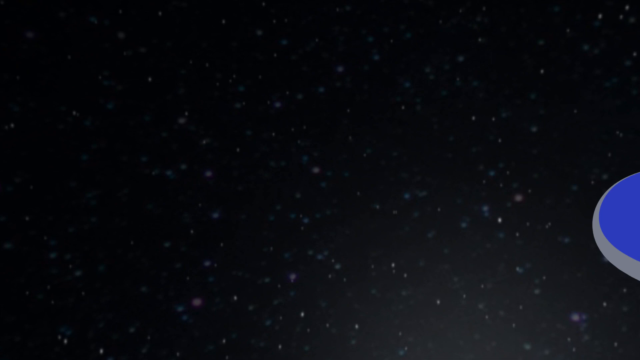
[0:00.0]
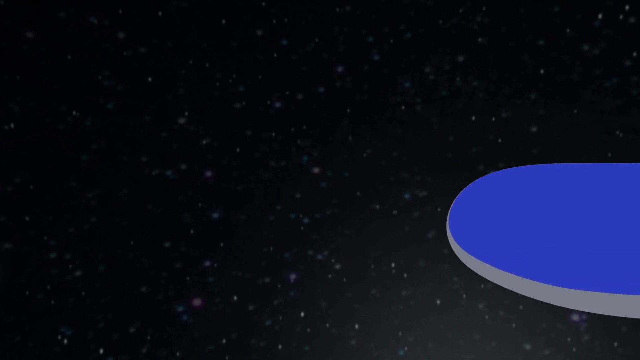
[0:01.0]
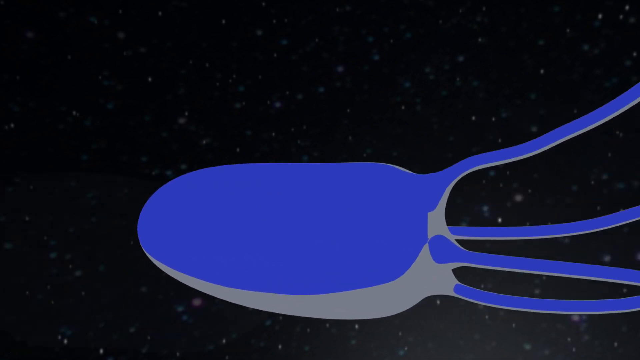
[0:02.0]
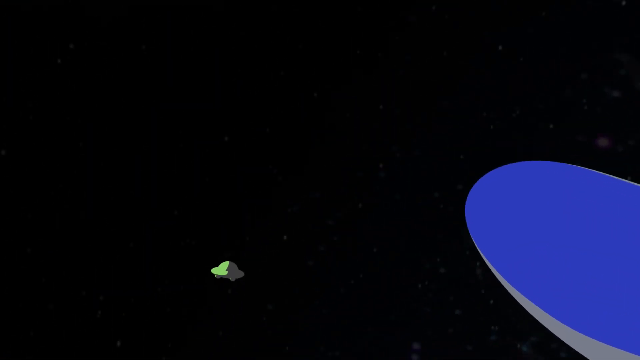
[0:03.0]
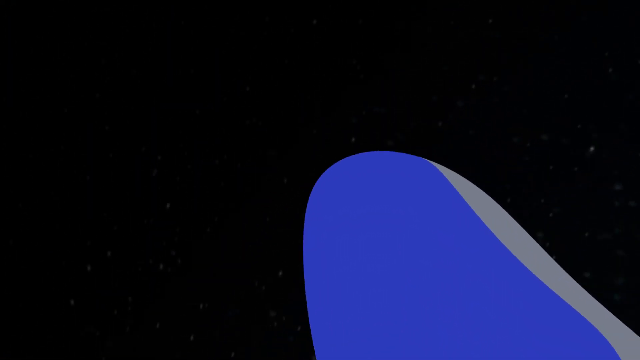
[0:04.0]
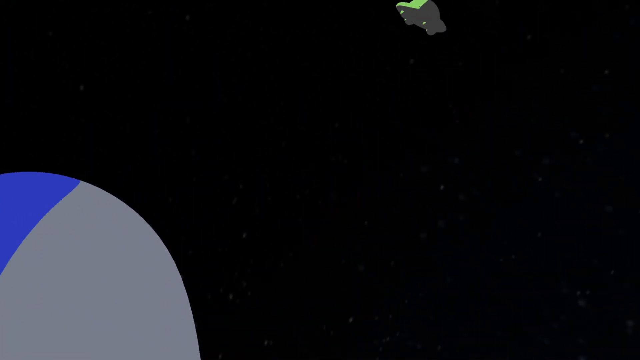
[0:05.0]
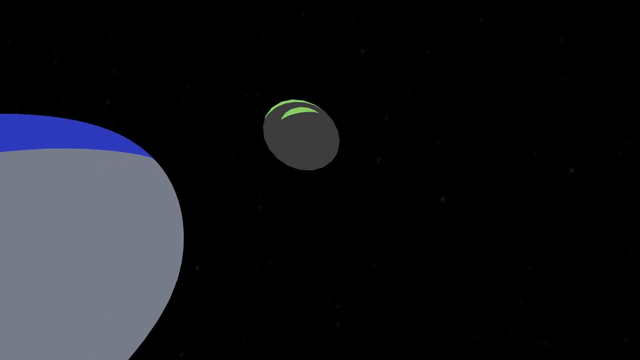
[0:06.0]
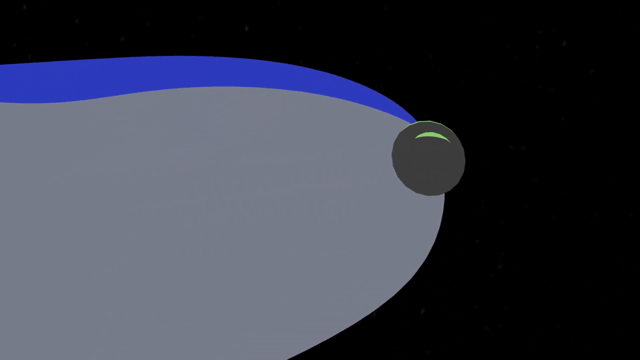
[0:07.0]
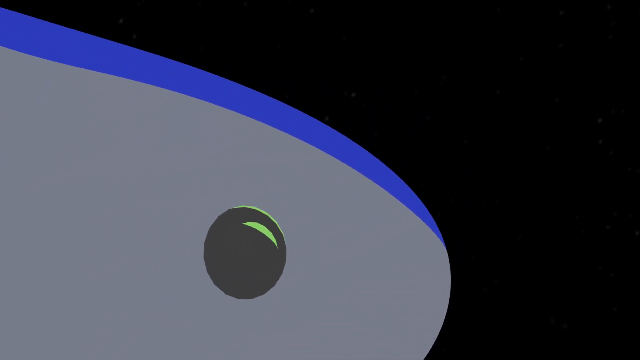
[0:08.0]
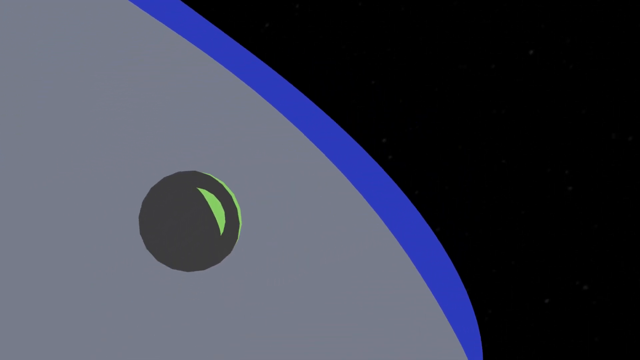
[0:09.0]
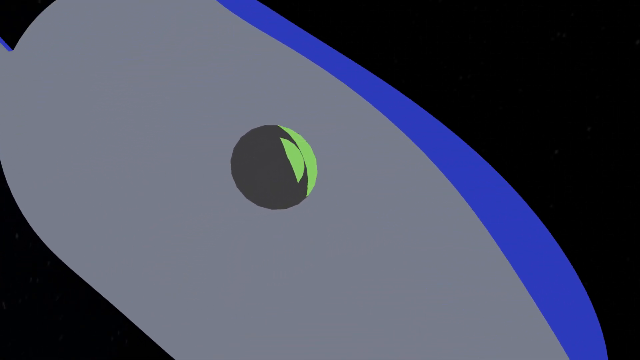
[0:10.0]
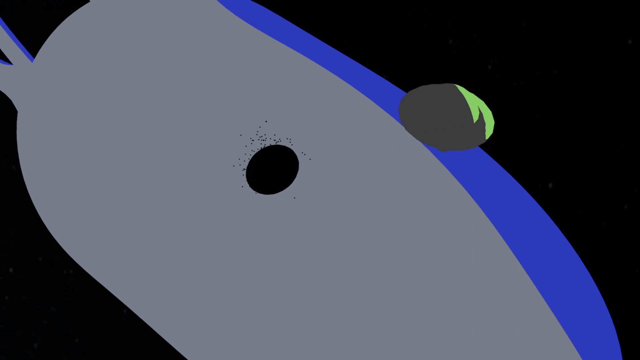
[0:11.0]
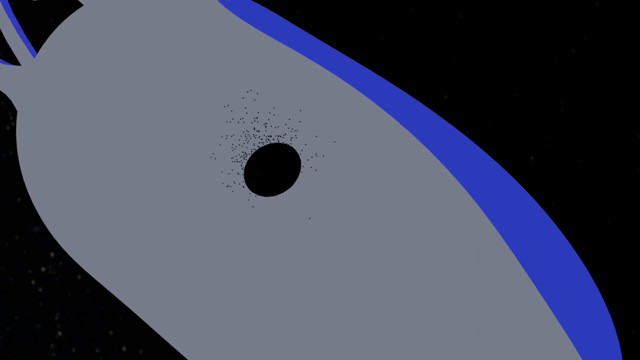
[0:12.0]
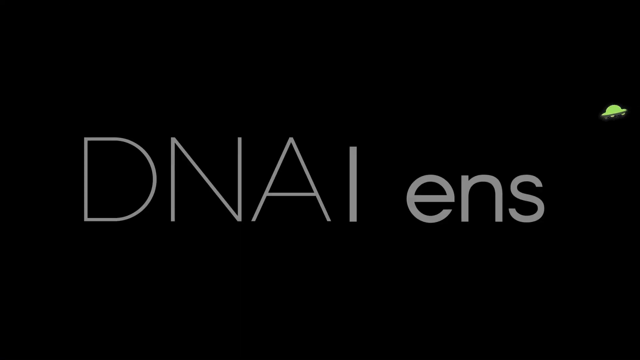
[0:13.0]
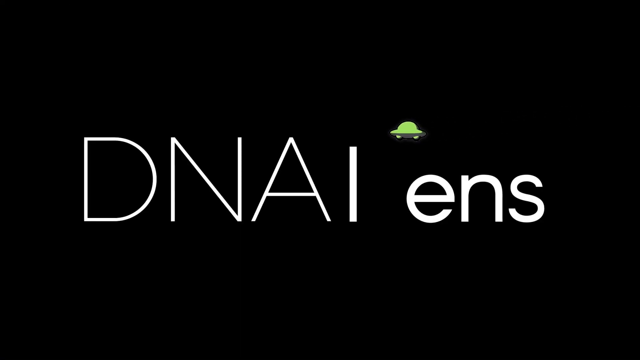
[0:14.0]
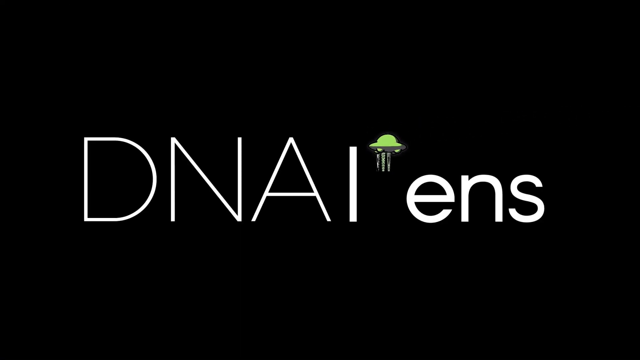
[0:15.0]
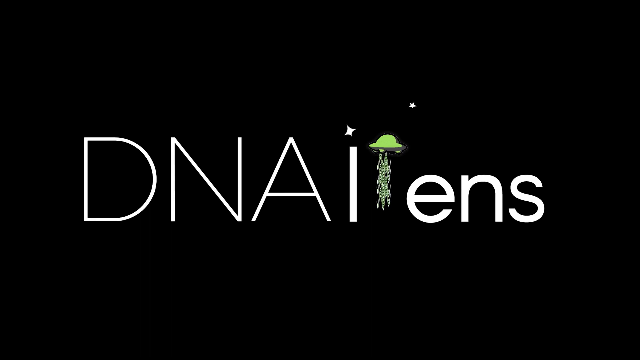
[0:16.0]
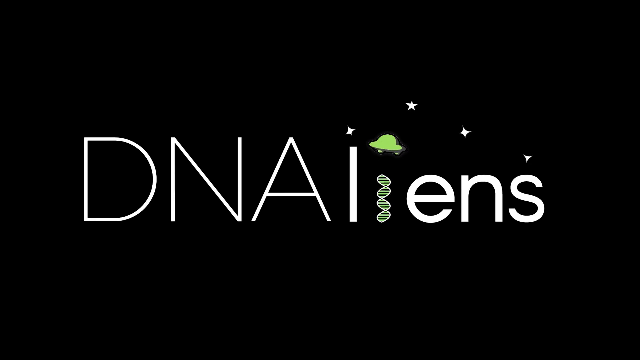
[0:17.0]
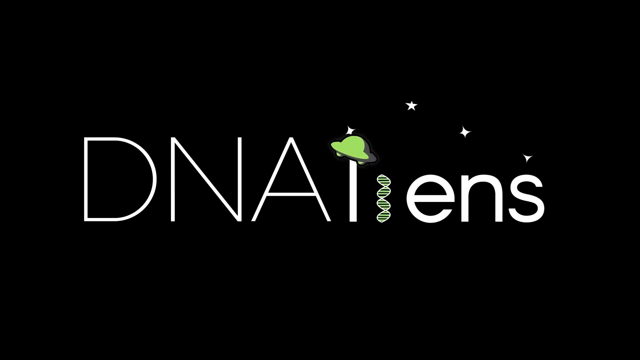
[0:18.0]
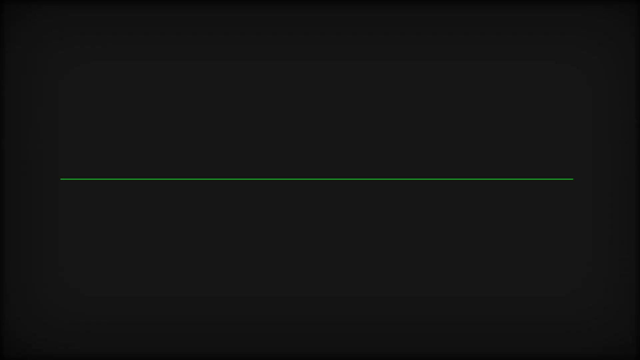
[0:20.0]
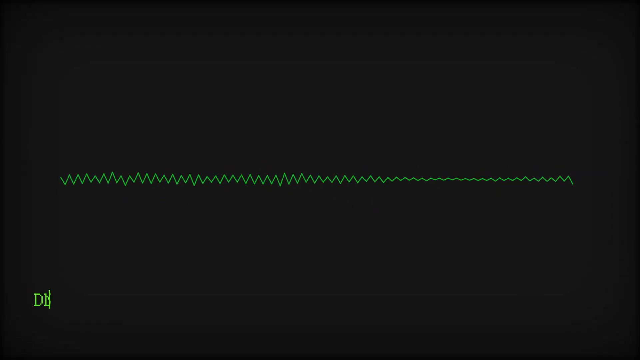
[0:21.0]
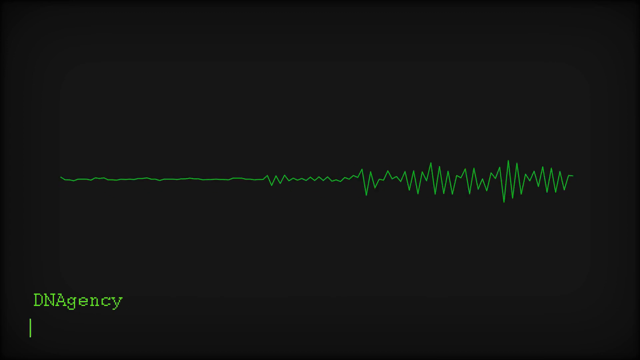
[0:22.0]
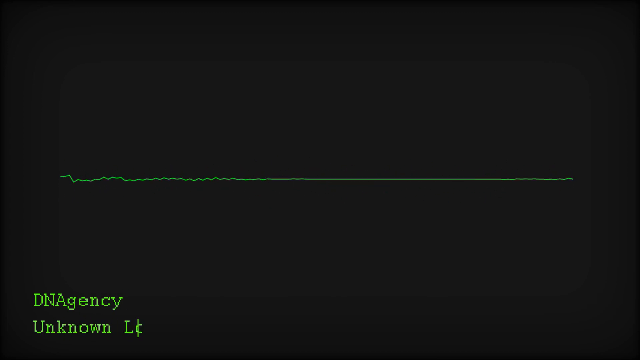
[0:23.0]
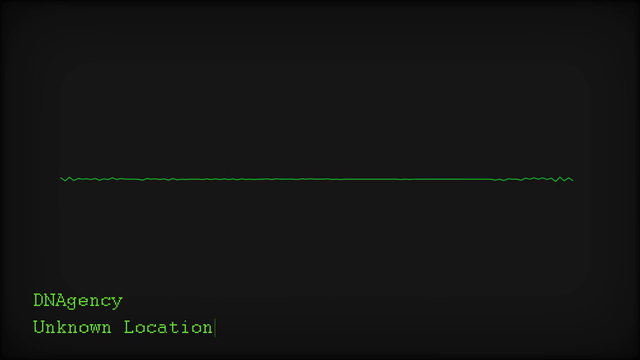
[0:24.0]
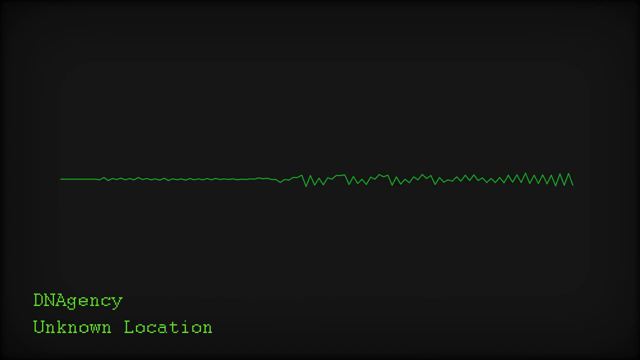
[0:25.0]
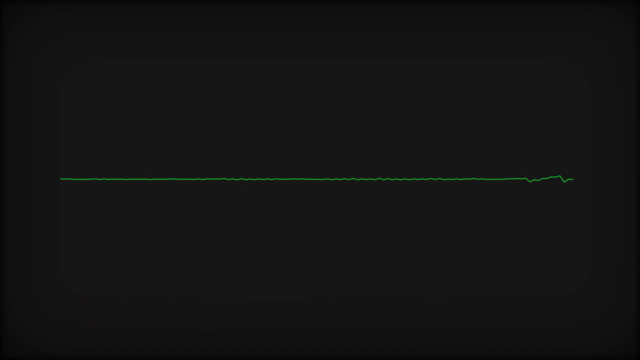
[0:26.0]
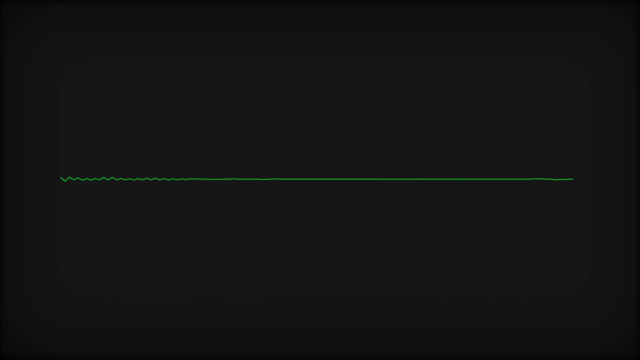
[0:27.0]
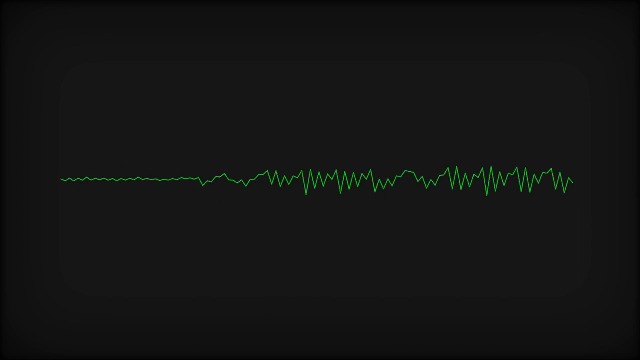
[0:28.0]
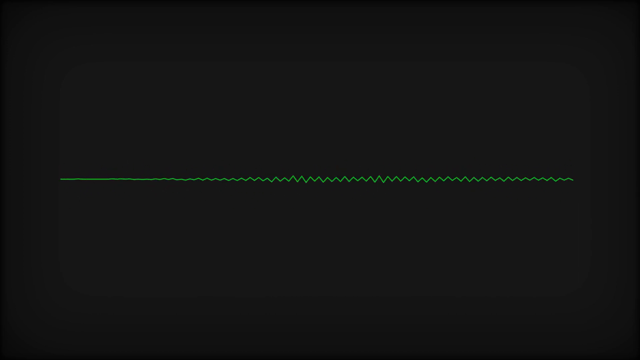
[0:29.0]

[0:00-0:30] An object seems to be trying to capture another, smaller spherical object. The larger object is kind of oval-shaped, sort of like an octopus with tails, and it chases the smaller object. It has a blue border and gray, and is kind of elongated and flat with tails like a squid. It captures the spherical object. An object then detaches from the gray part of the larger object's body; it looks like a cylinder, sort of like a flying saucer, light lime green with a gray border, and it takes off. A bunch of black grains, like grains of pepper, come flying out of the hole where the object was attached. The image cuts to a graphic that reads D-N-A, then a letter that might be a capital I or a small l, then E-N-S. In the middle, between the l and the ENS, the small flying saucer object hovers, and a person drops down and transforms into a double helix.